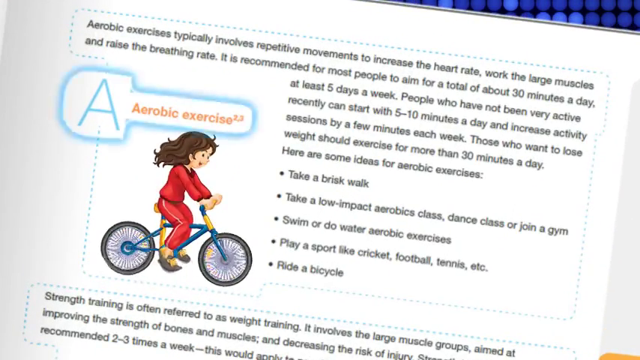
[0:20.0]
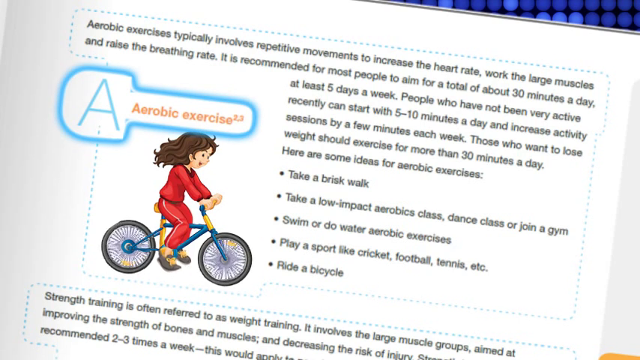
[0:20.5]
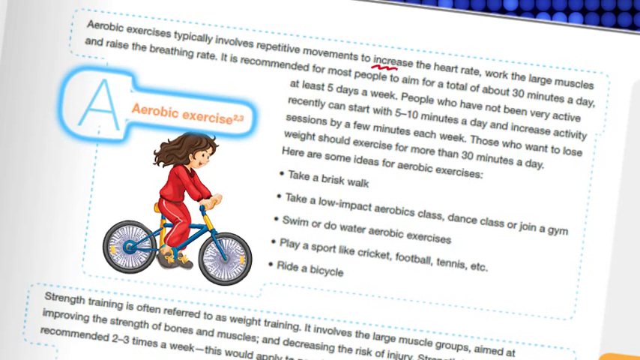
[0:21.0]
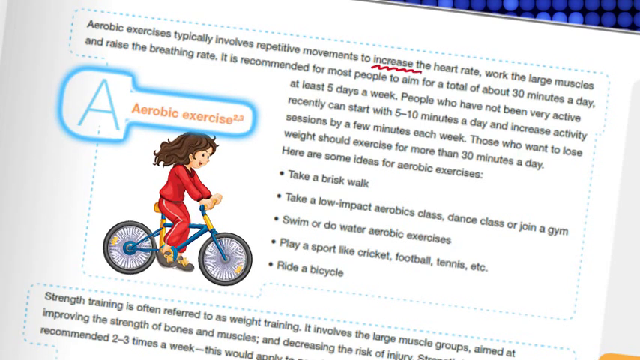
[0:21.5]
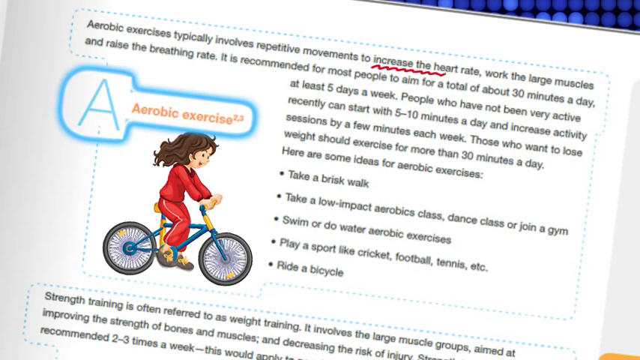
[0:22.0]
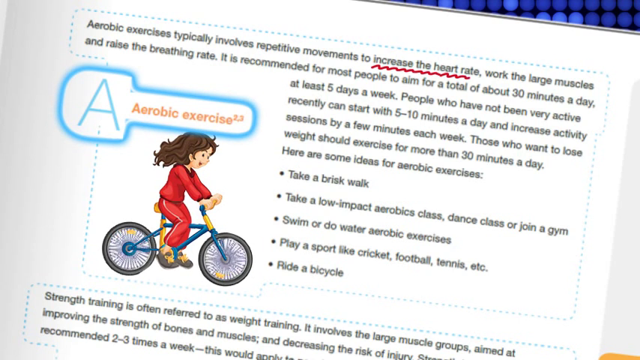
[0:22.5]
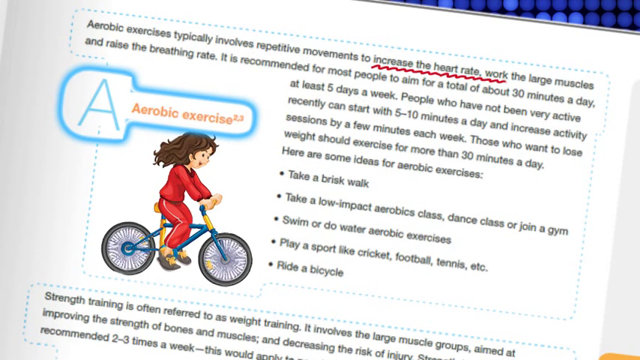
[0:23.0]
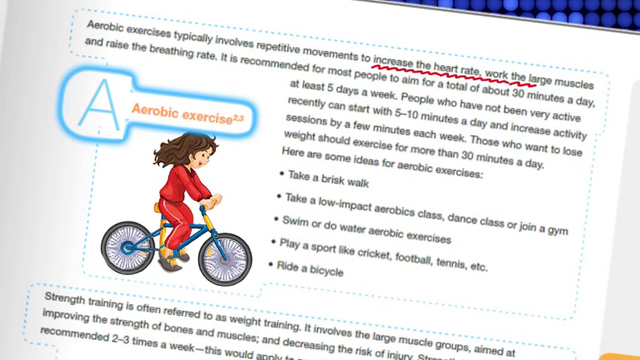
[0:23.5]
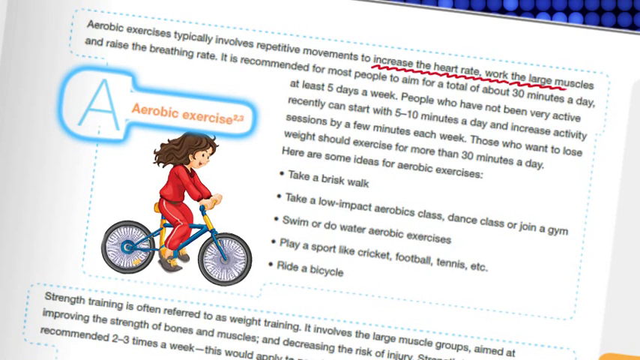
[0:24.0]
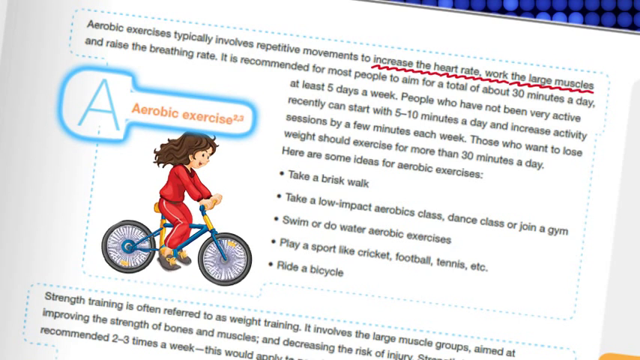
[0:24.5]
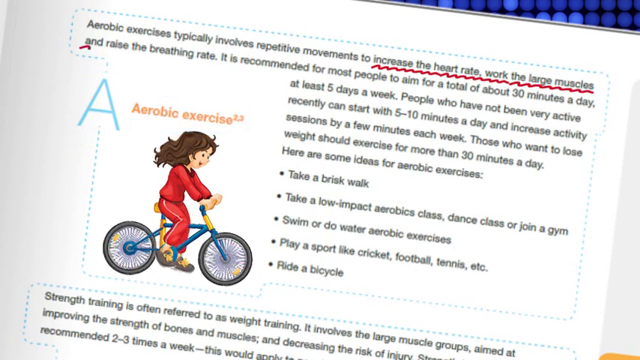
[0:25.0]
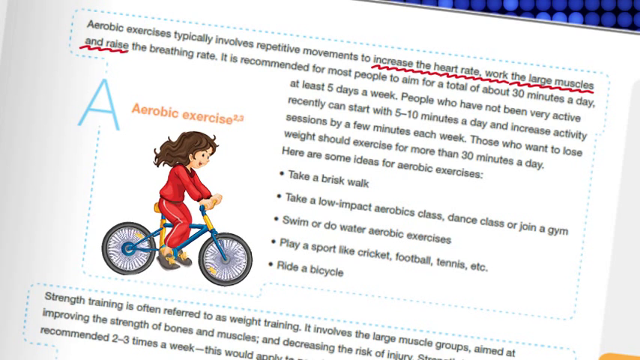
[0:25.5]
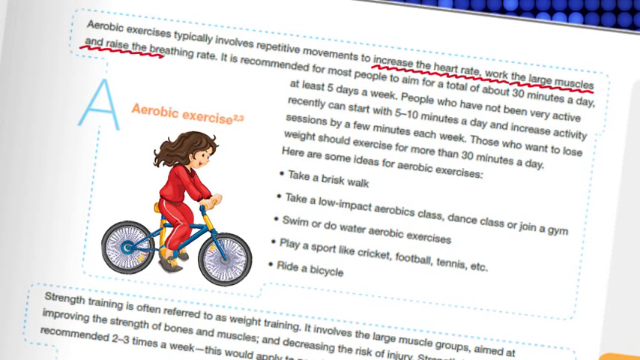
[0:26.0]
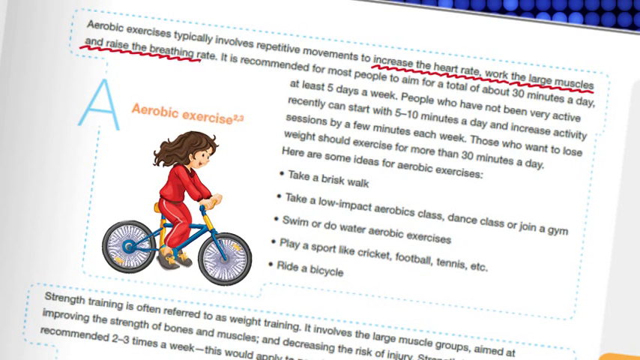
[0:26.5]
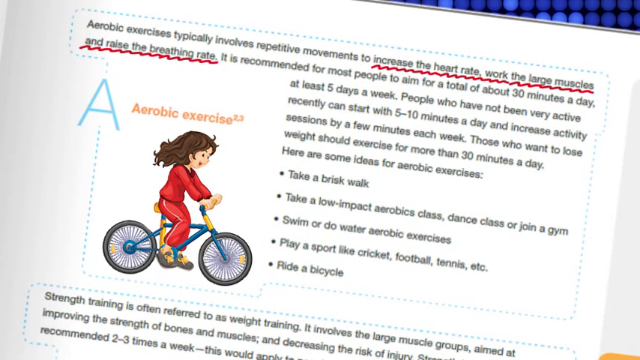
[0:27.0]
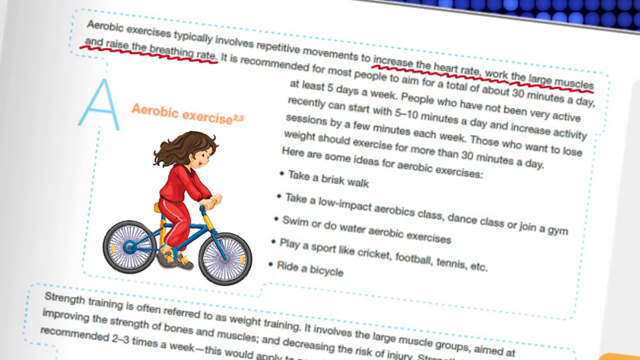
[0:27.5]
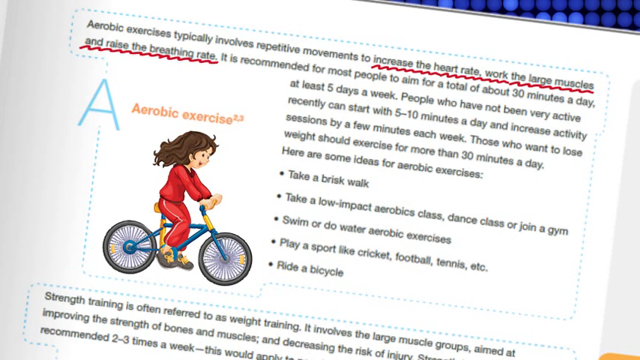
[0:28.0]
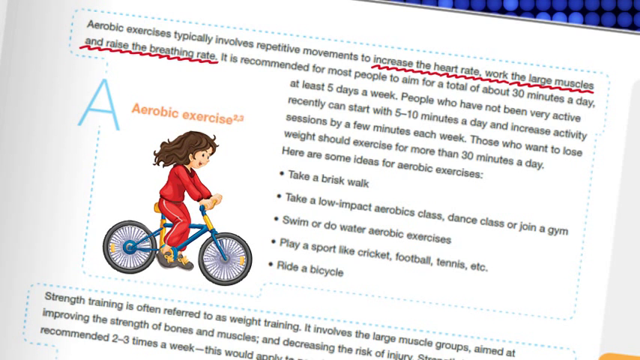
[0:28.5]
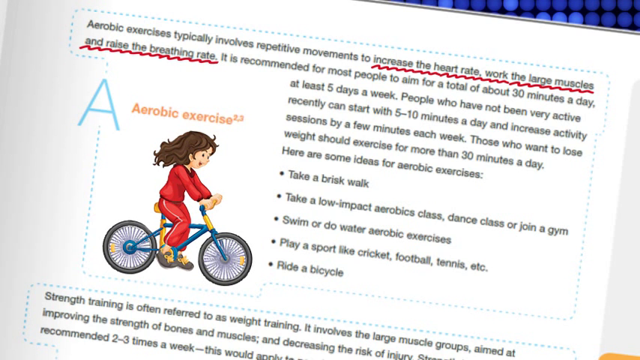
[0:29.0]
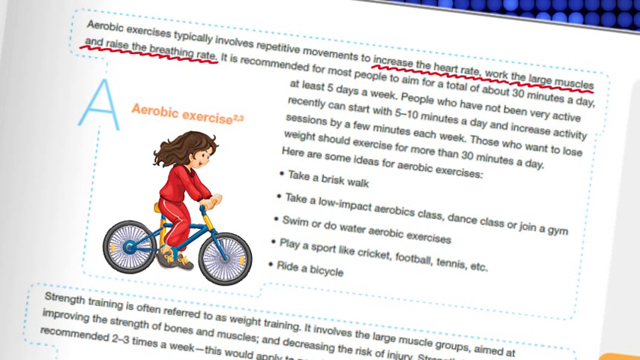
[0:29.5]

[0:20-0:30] The book lies open, seen very close on the top of the right side of the page. On the left side of the page is an animated girl on a bicycle; her feet and the bicycle wheels move. A red wavy underline draws itself underneath the text "increase the heart rate, work the large muscles, and raise the breathing rate." Above the girl there is an "A" on the left followed by "aerobic exercise", outlined in a hazy blue outline. All the text is black, and the only color on the text is the red underline. There is much more text on the page, but the only things that move are the girl's legs, the bicycle wheels and the red wavy line being drawn under the text.